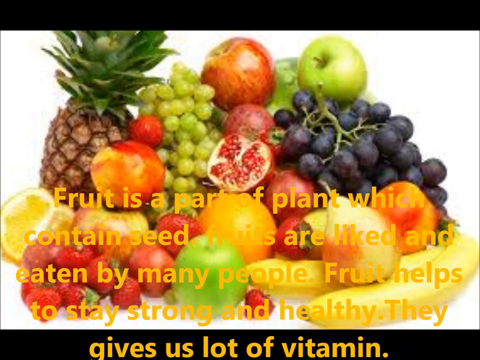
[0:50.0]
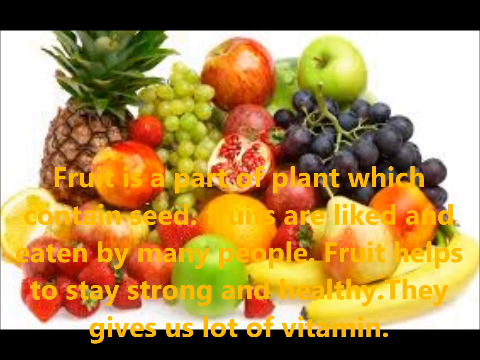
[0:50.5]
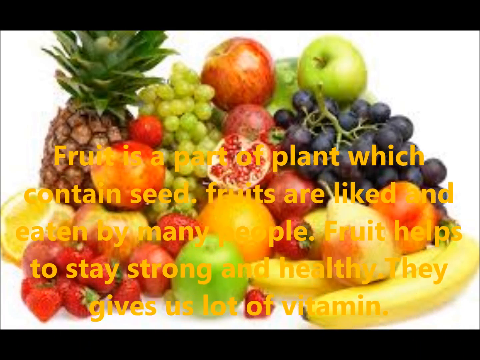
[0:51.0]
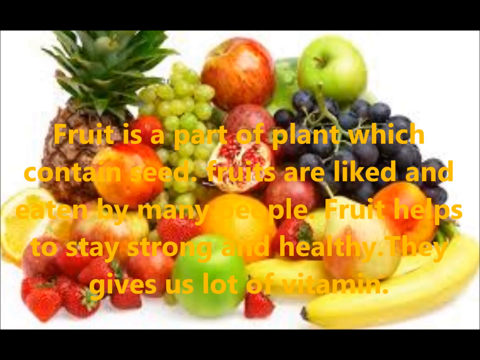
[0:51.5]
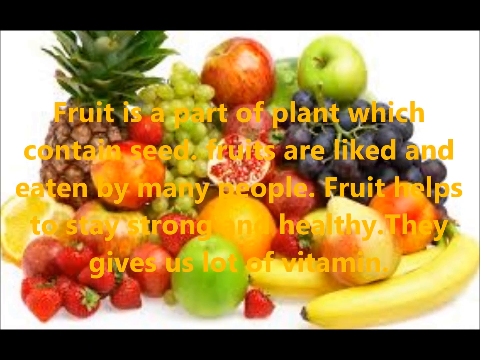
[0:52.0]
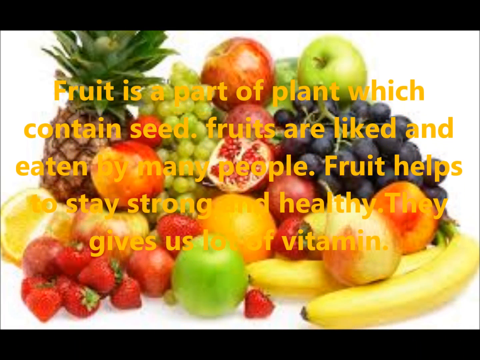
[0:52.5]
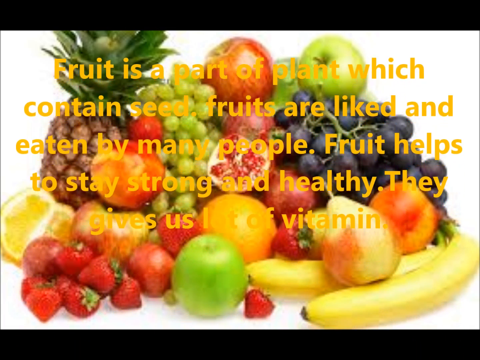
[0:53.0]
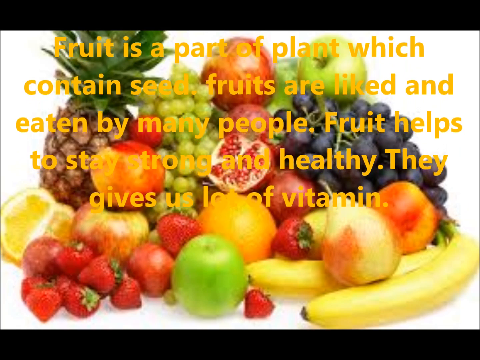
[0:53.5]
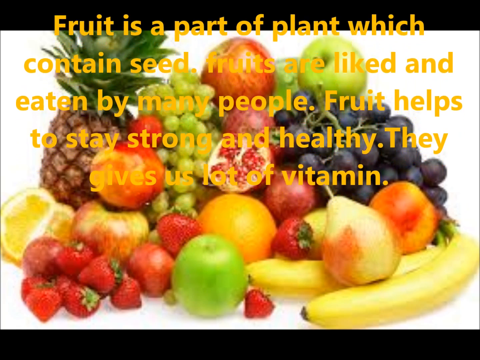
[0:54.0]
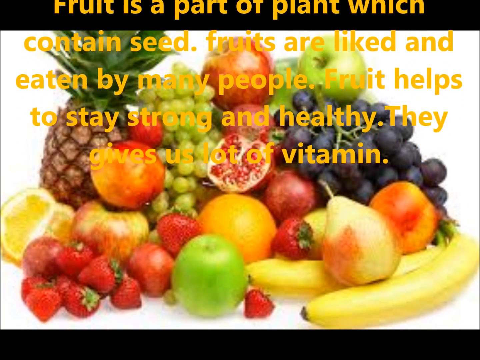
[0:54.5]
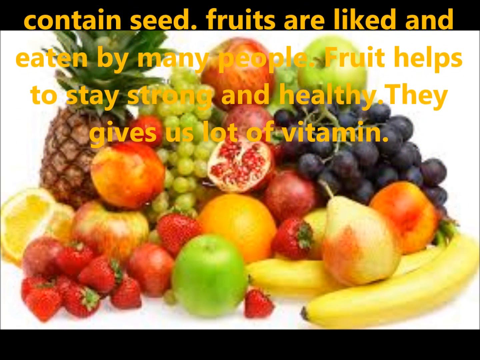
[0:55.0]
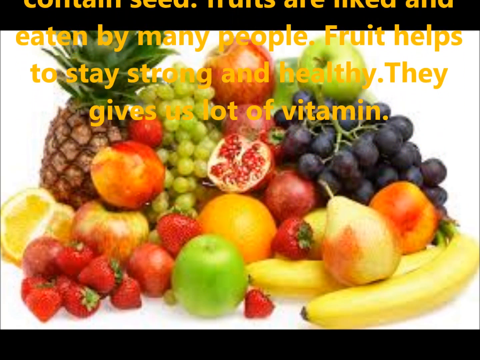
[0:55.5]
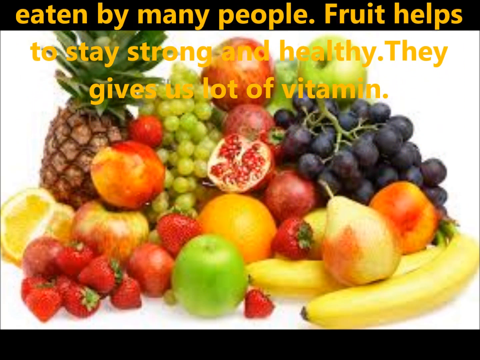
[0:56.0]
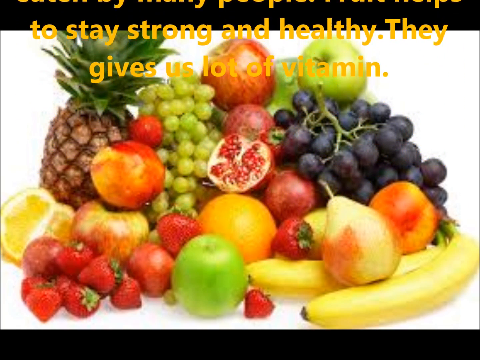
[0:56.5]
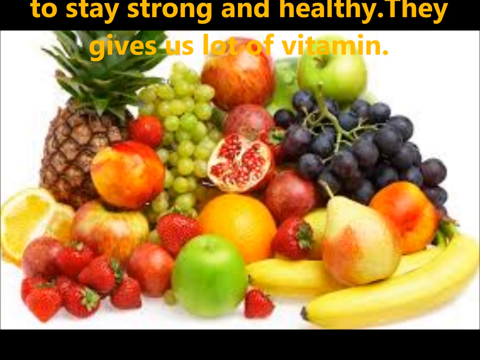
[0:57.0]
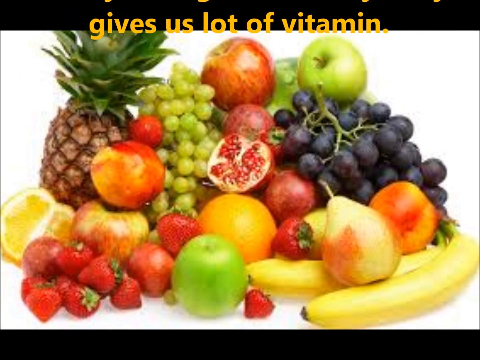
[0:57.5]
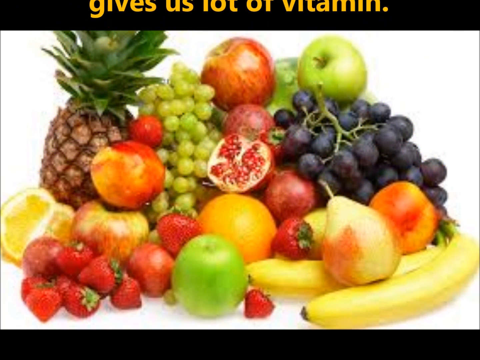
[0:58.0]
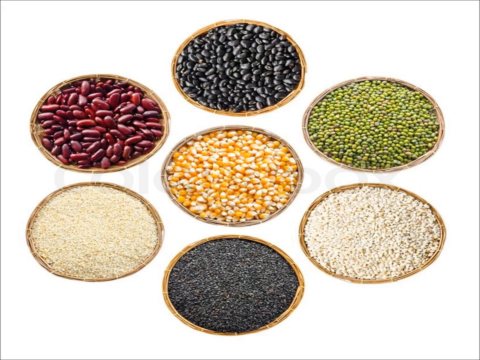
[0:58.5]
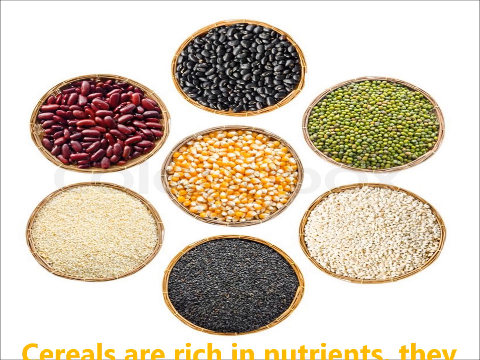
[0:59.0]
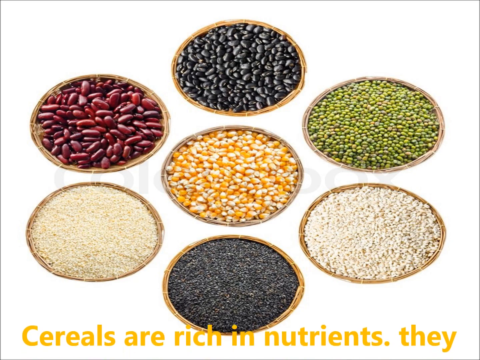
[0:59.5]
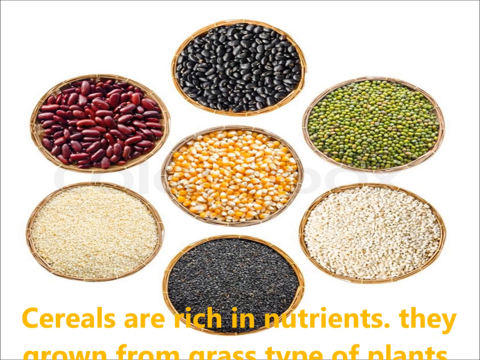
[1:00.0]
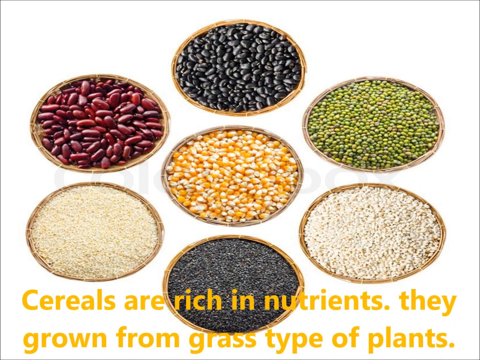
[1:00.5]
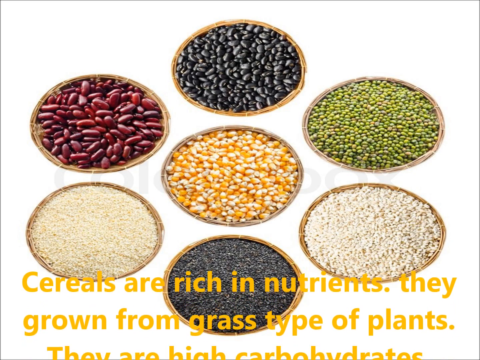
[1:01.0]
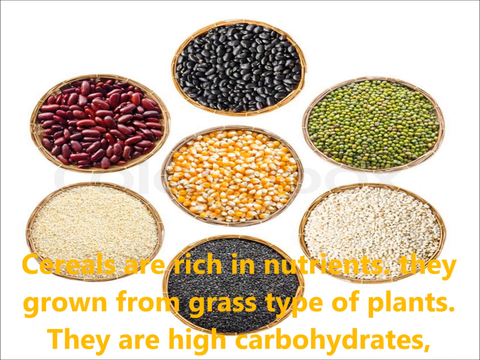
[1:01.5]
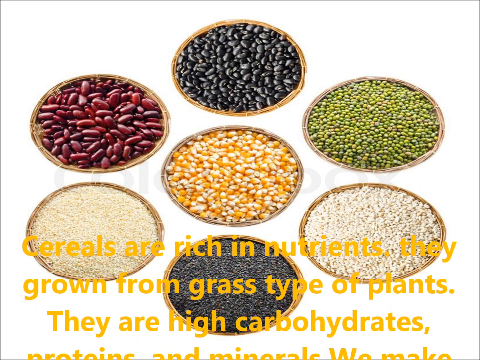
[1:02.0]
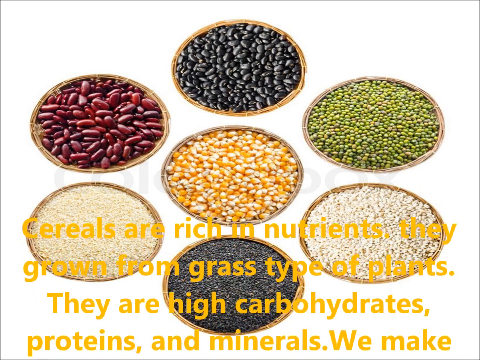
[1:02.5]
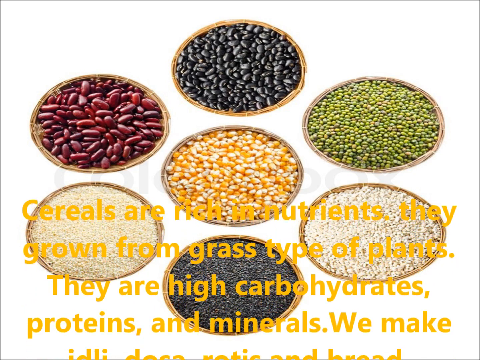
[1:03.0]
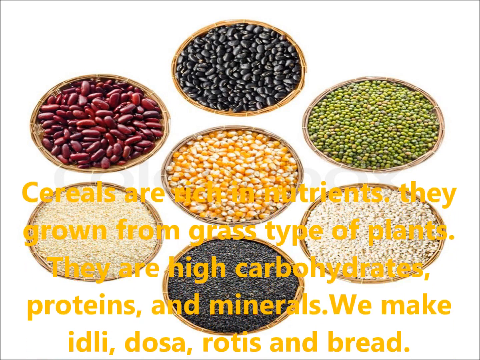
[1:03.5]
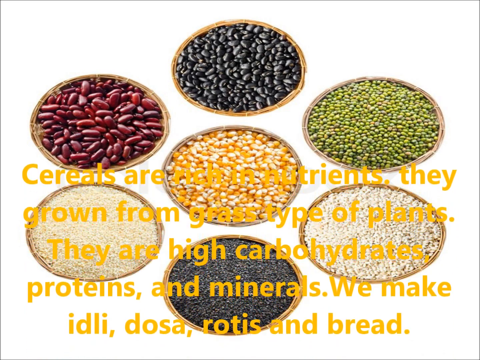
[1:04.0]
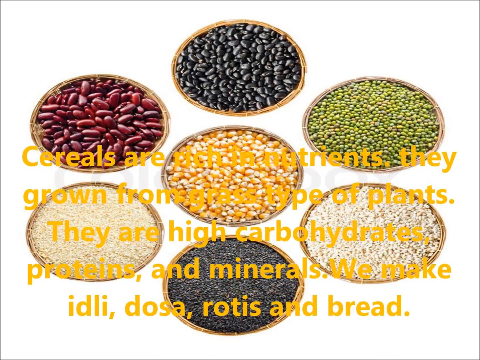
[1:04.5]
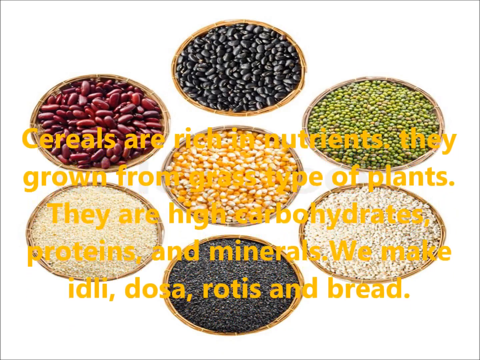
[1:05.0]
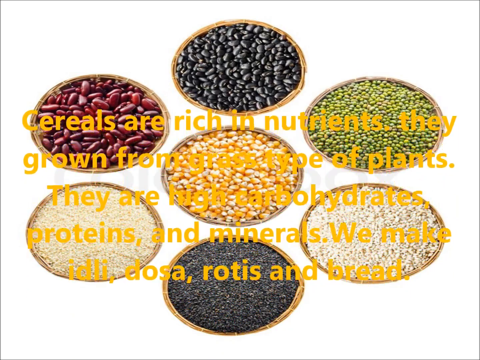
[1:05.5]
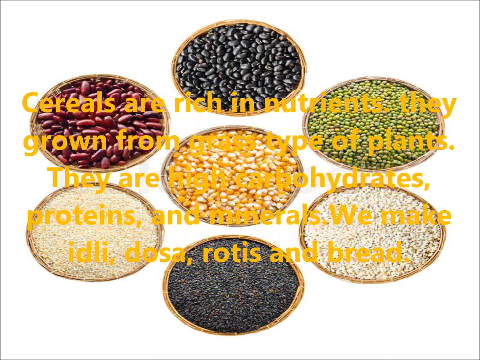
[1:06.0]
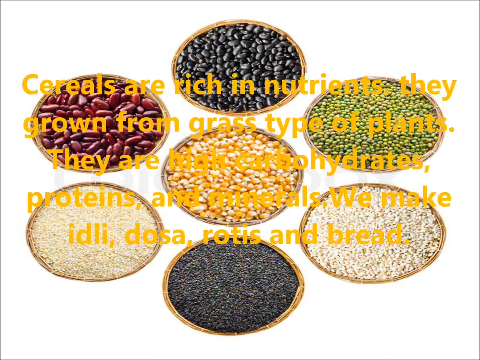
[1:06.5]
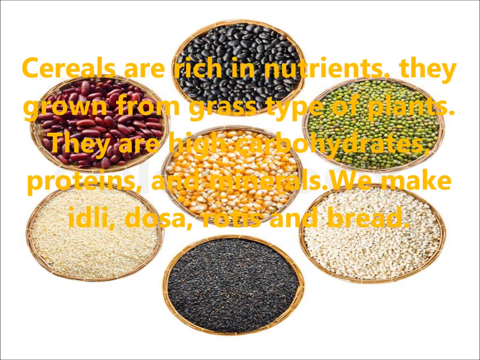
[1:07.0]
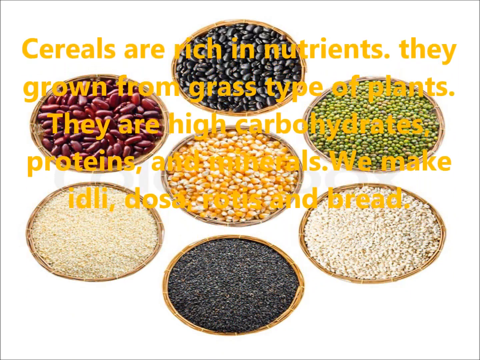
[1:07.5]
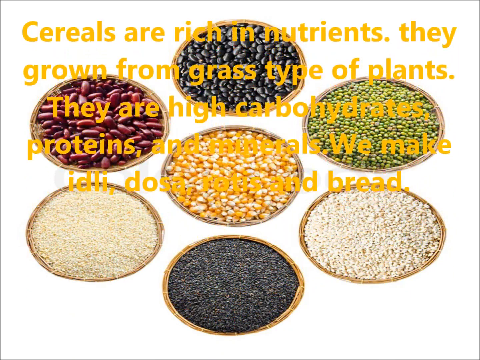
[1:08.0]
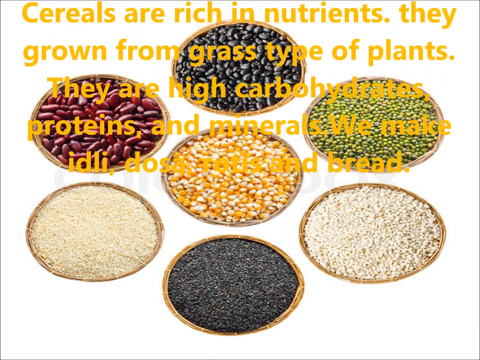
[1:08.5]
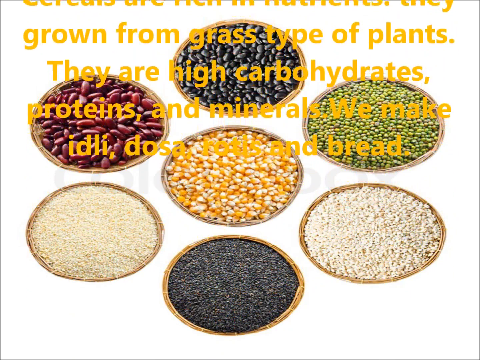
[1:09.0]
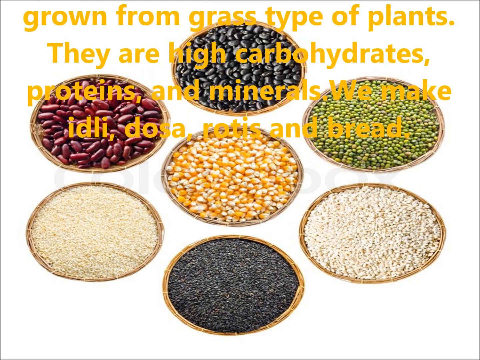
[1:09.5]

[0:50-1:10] A picture shows a bunch of fruits together, including grapes, apples, bananas, strawberries, blueberries and lemons. Text floats up the screen from bottom to top, about how fruit is the part of the plant which contains the seed, how it helps you stay strong and healthy, and how it gives you a lot of vitamins. After a transition, a bunch of seeds from plants that people use appear, such as green plant seeds and yellow corn seeds. There seem to be about seven different groups of plant seeds on the screen, all circling around each other, with the corn in the middle.